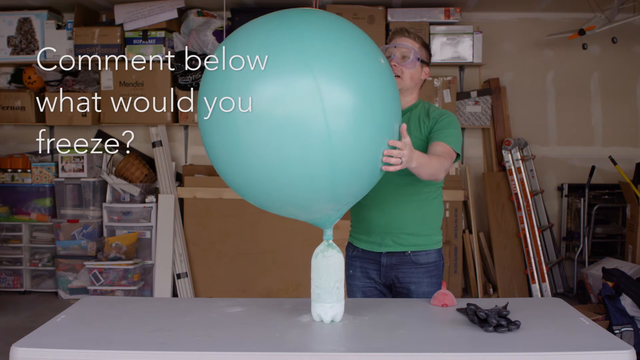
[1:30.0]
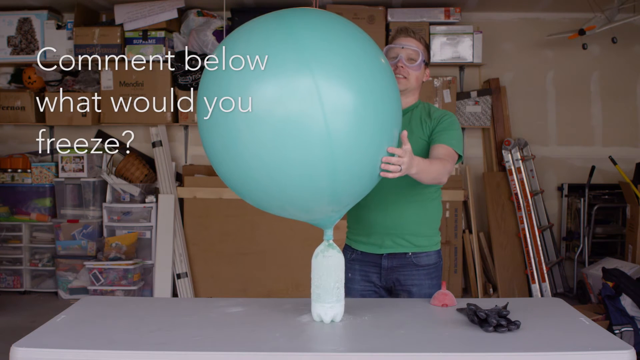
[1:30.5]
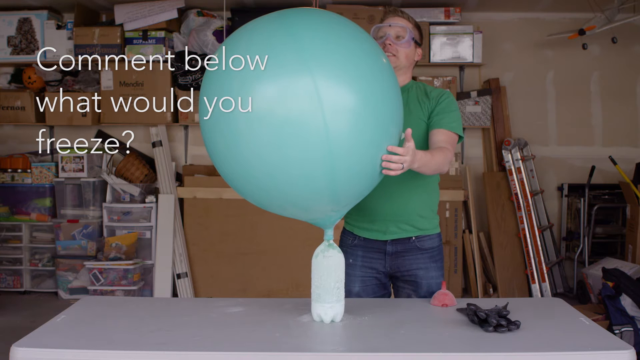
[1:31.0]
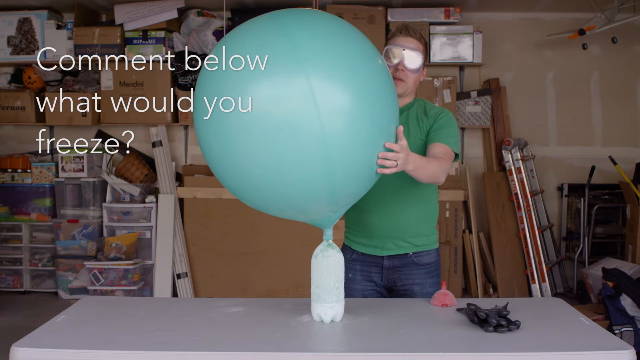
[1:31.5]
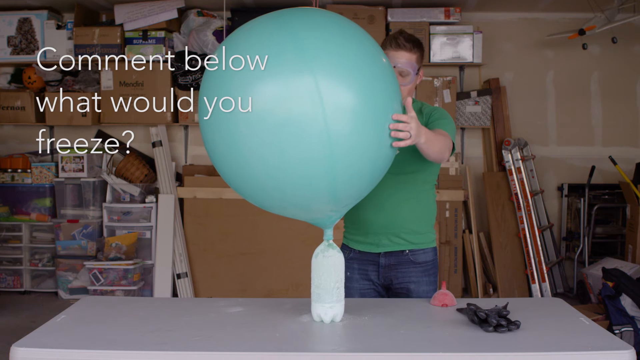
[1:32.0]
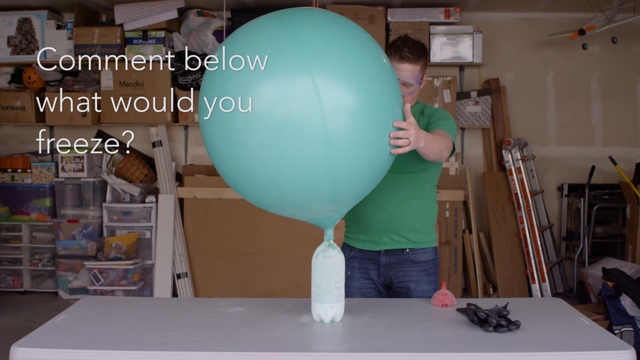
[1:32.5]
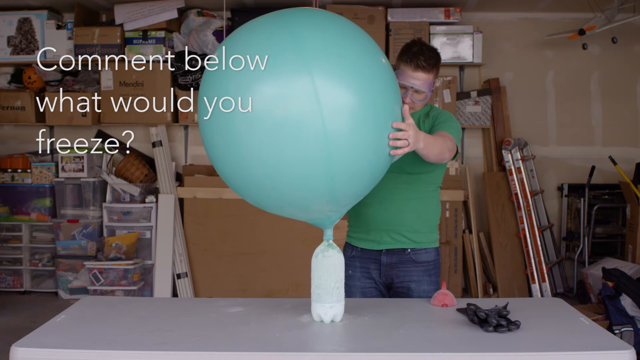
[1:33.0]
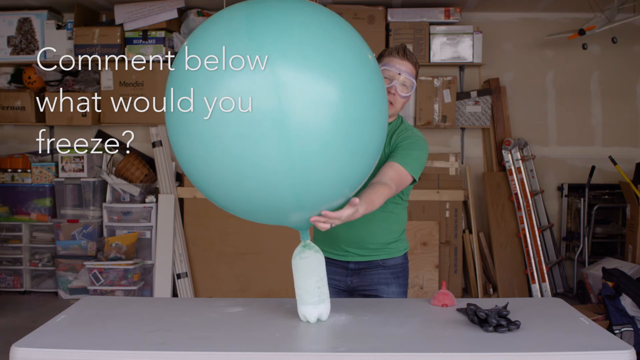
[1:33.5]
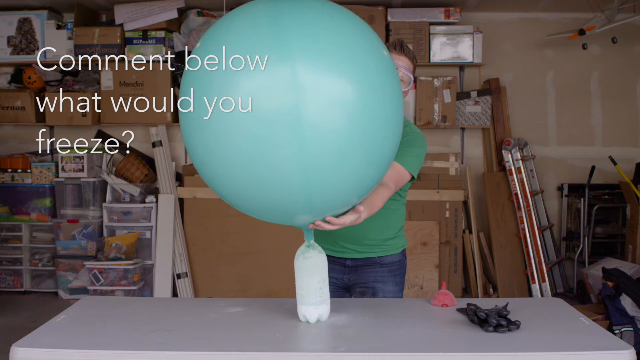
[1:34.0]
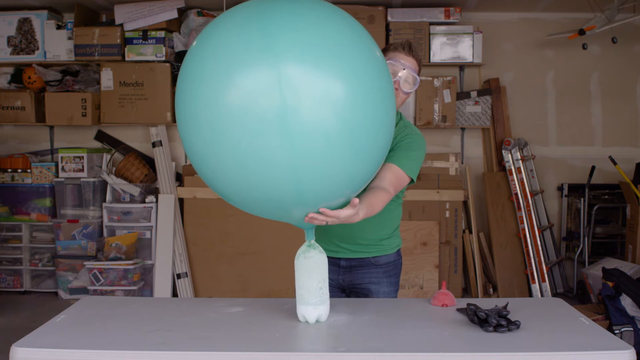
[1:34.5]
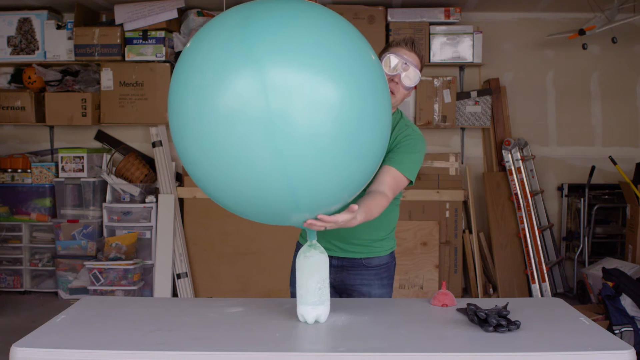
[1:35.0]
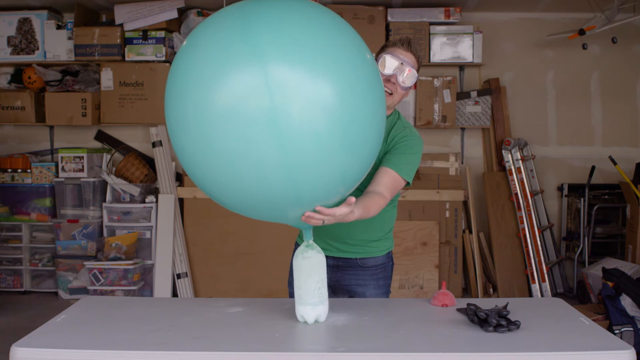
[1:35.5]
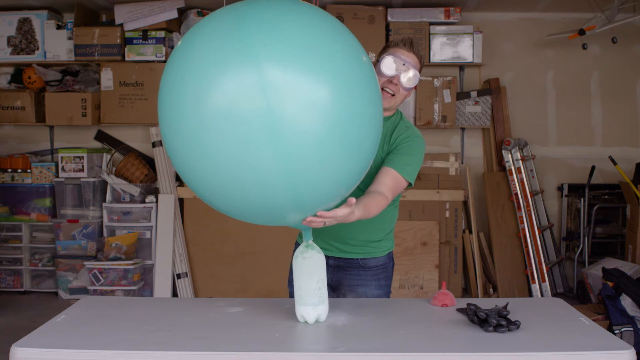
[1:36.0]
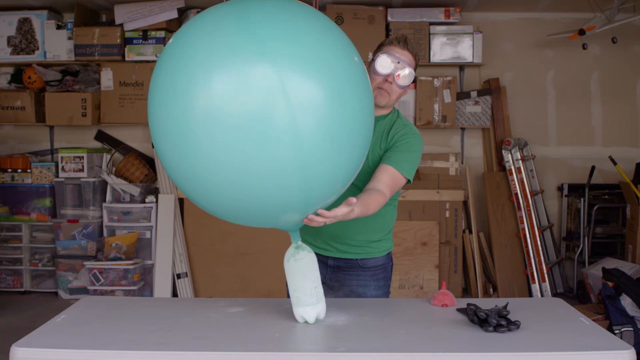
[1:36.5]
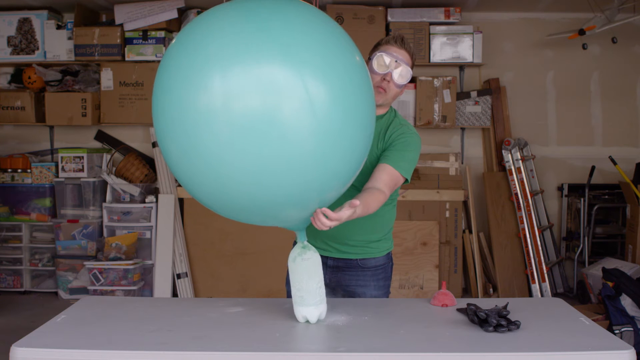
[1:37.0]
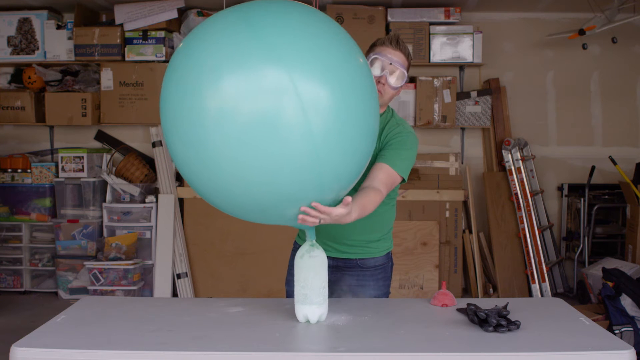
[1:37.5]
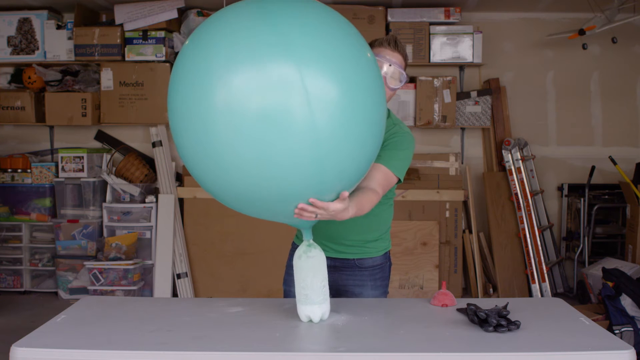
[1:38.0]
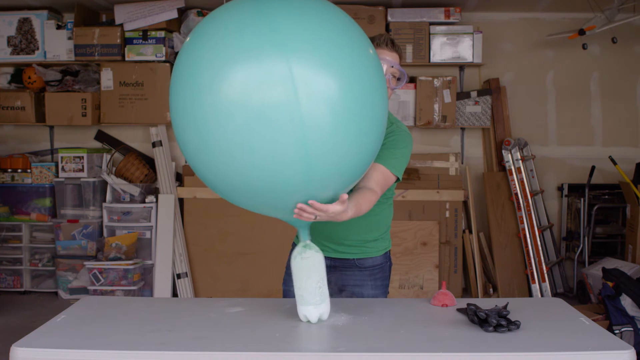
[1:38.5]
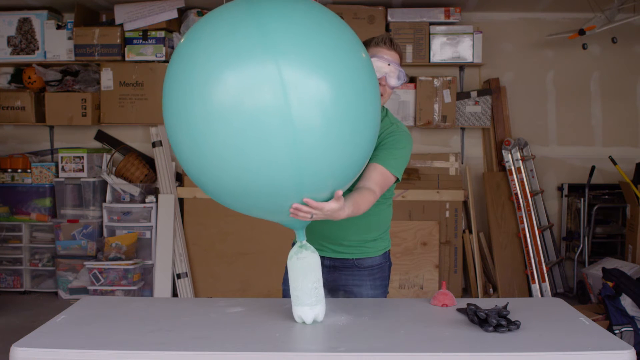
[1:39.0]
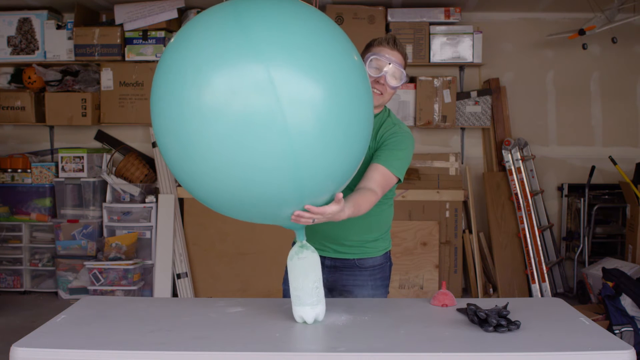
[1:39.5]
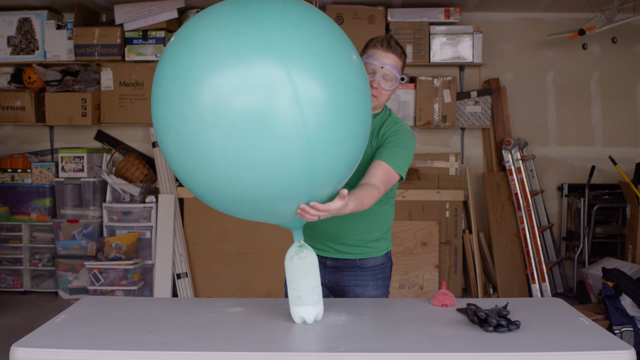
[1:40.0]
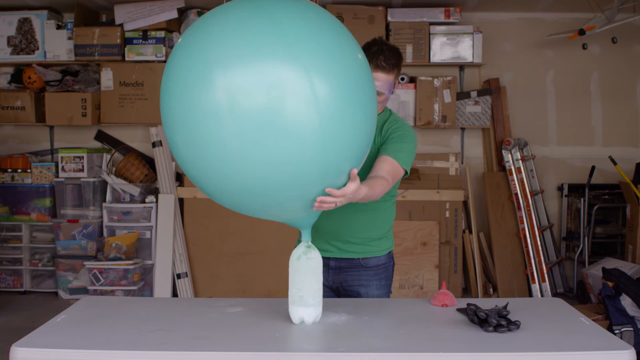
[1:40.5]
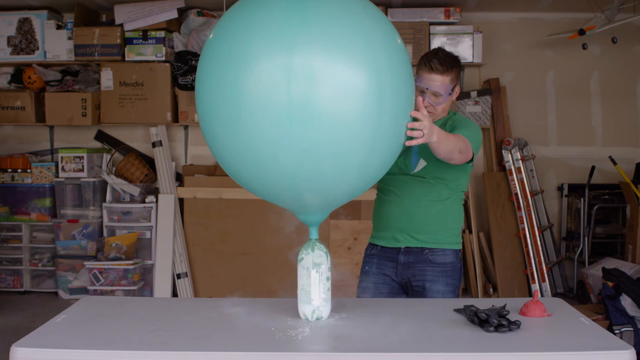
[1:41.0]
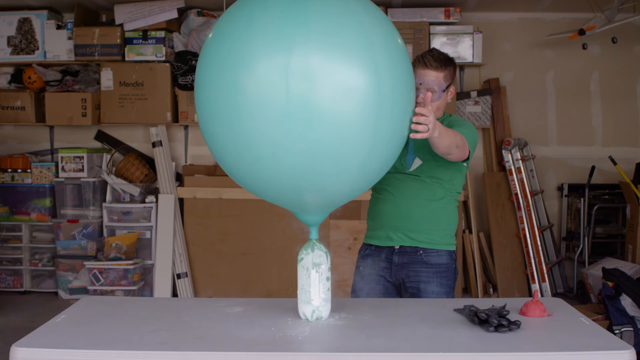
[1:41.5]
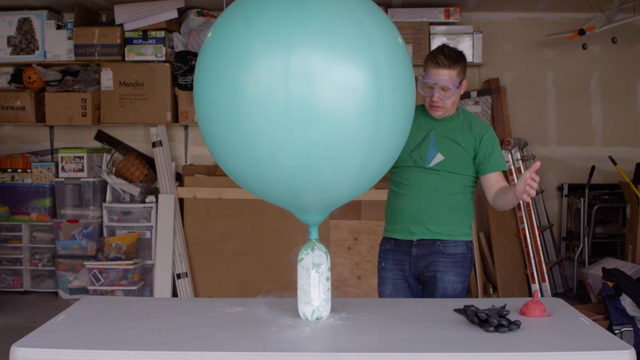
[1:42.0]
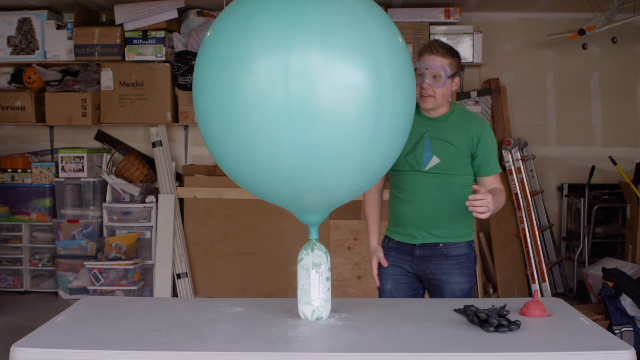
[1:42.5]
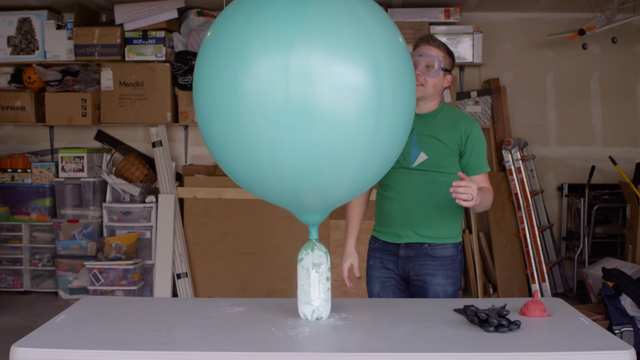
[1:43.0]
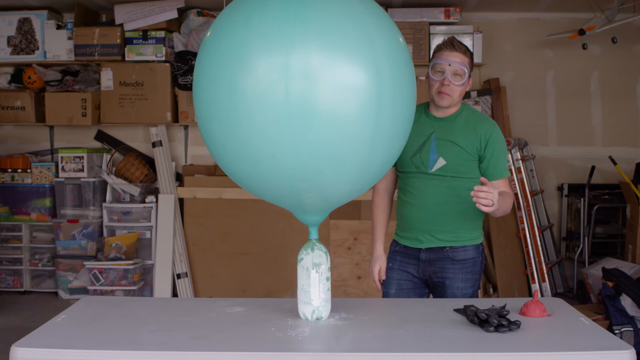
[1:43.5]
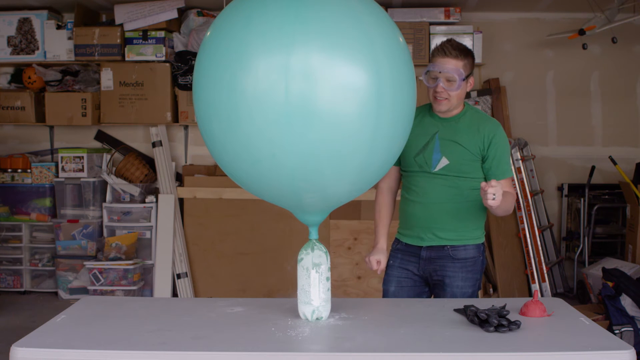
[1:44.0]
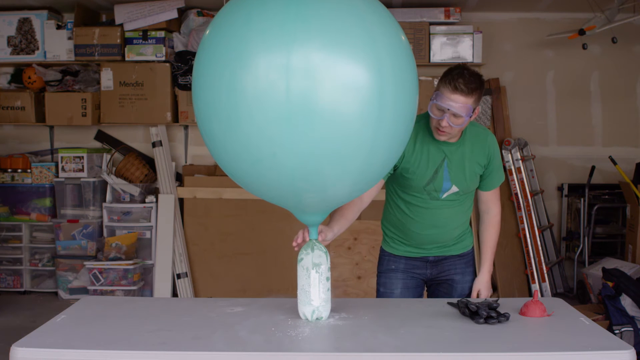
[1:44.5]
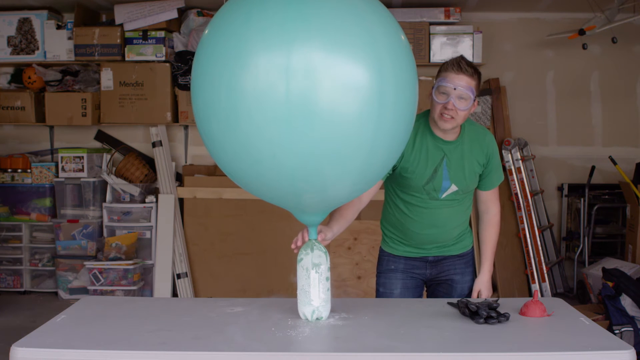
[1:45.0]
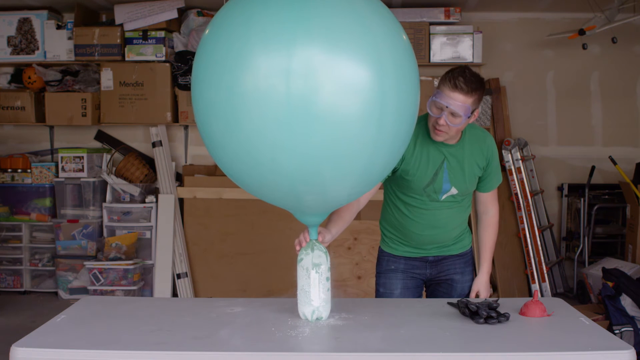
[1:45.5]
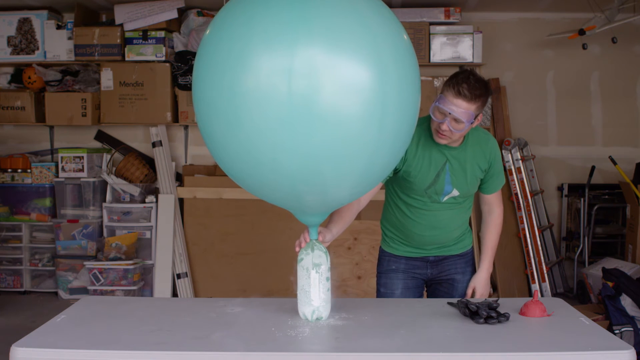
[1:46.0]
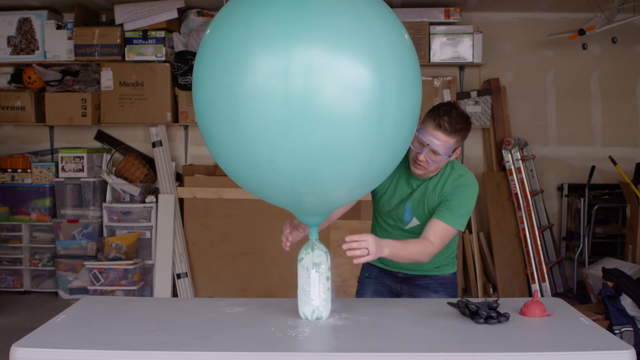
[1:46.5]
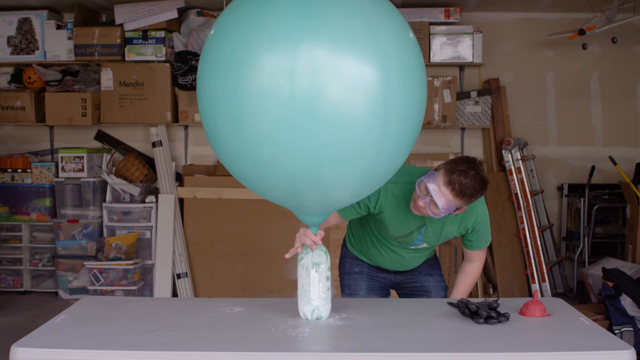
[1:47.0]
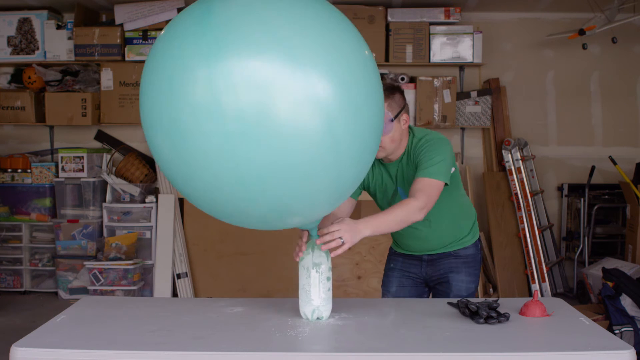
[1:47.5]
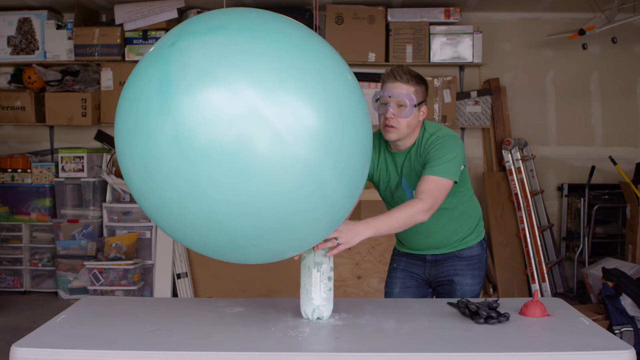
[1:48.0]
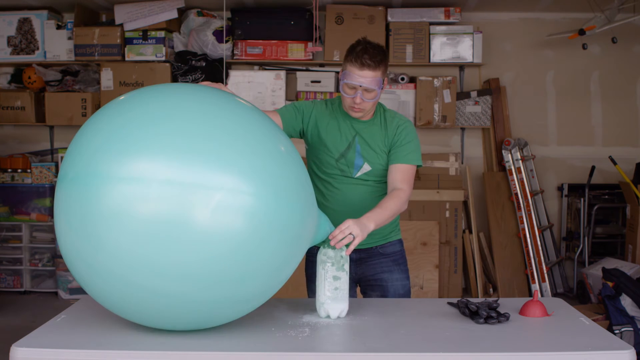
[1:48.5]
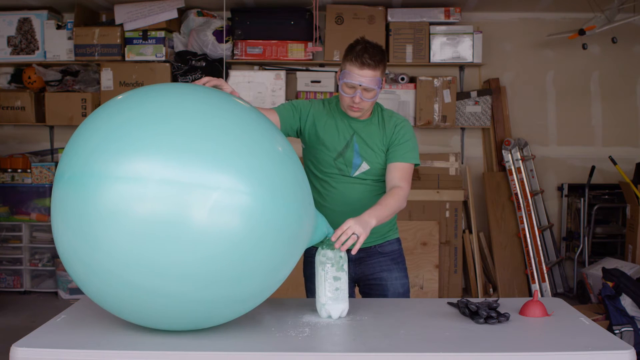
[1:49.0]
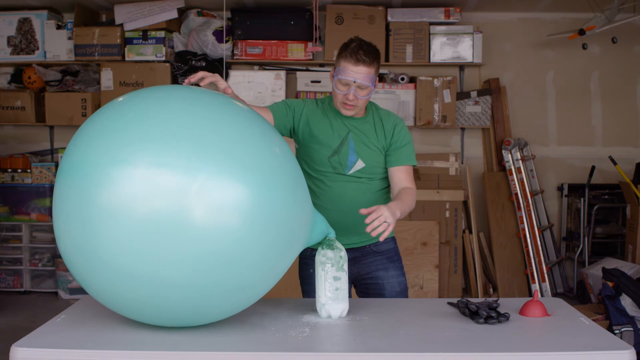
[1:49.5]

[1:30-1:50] The green balloon, attached to the empty green bottle lying on the table, expands slowly, becoming wider and wider, while nitrogen sticks to the sides of the bottle. To the right, the red funnel is off to the side, not put into the bottle. Many cardboard boxes are in the background, and in the top right of the screen the airplane with orange wings and a black tip hangs from the ceiling. Text reads "calm below or you would freeze".